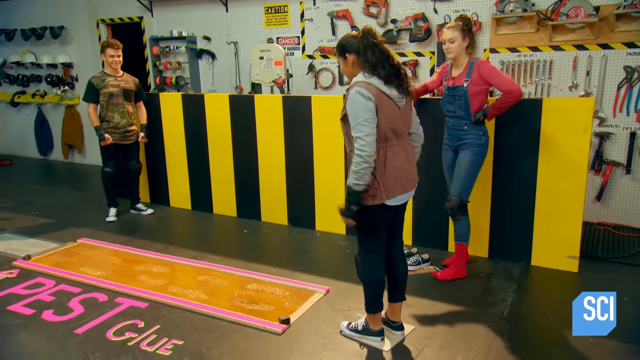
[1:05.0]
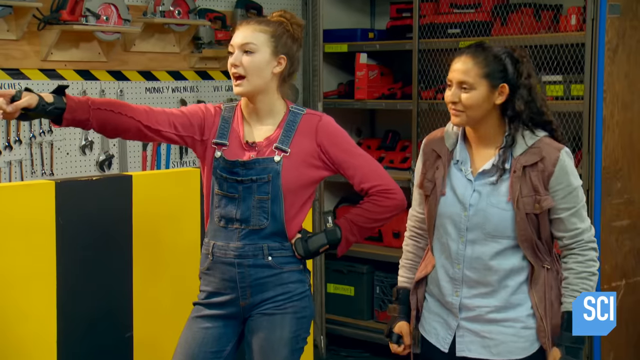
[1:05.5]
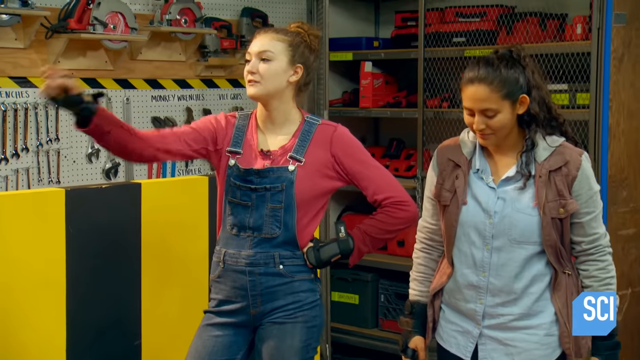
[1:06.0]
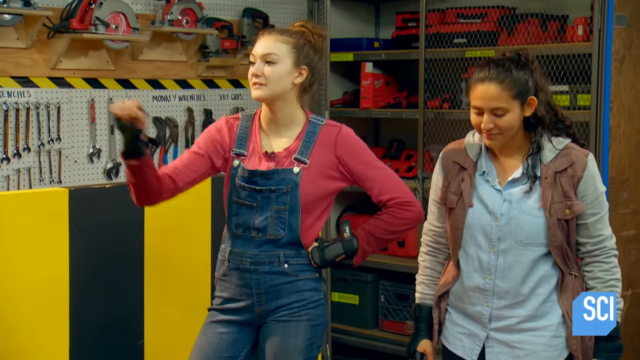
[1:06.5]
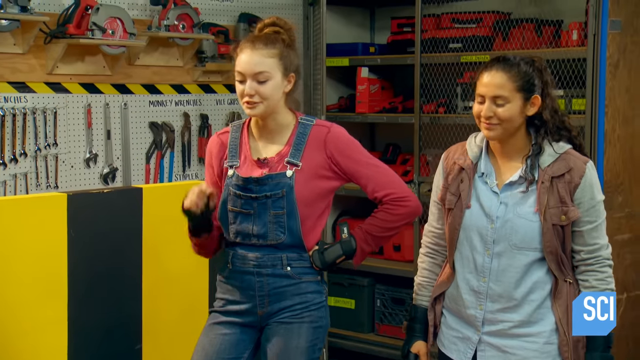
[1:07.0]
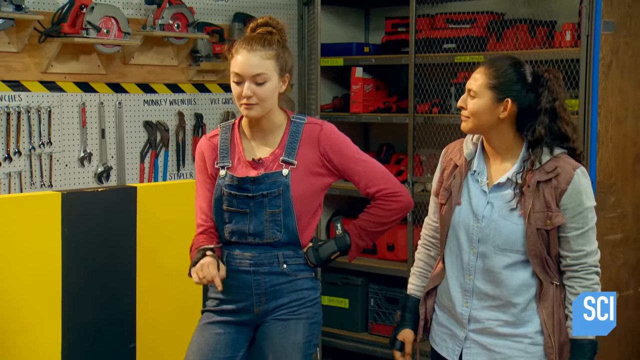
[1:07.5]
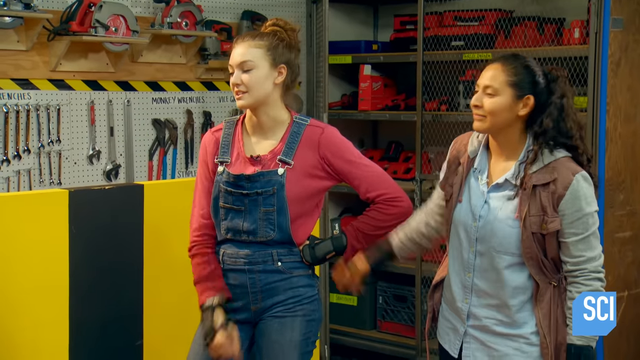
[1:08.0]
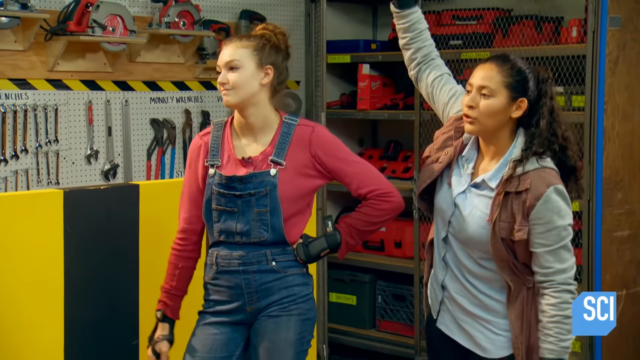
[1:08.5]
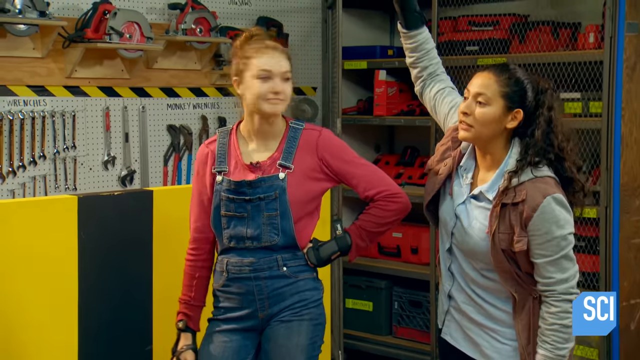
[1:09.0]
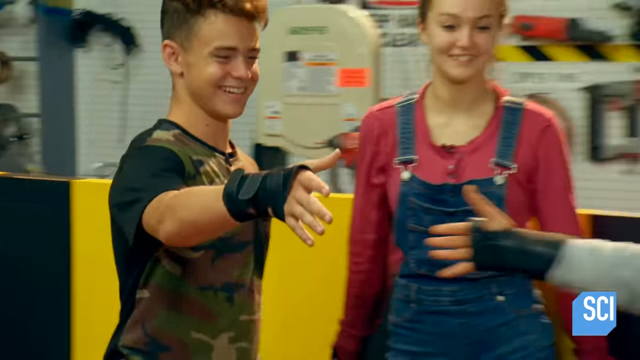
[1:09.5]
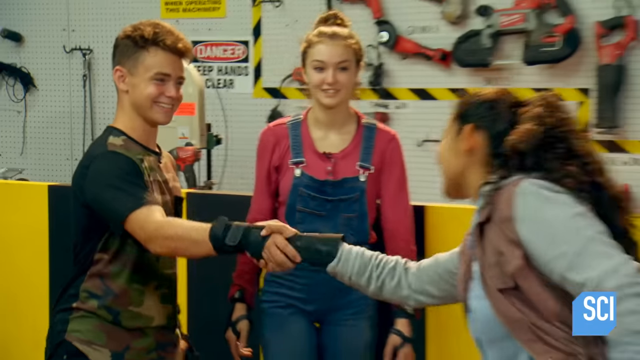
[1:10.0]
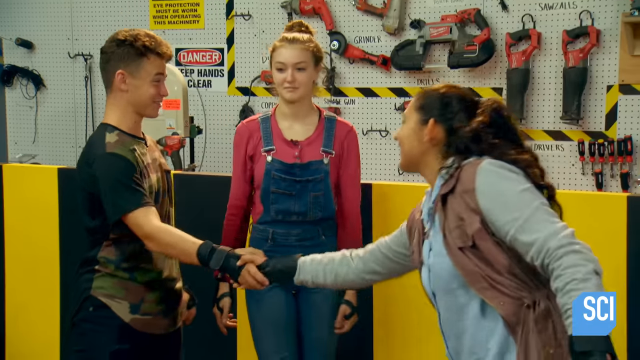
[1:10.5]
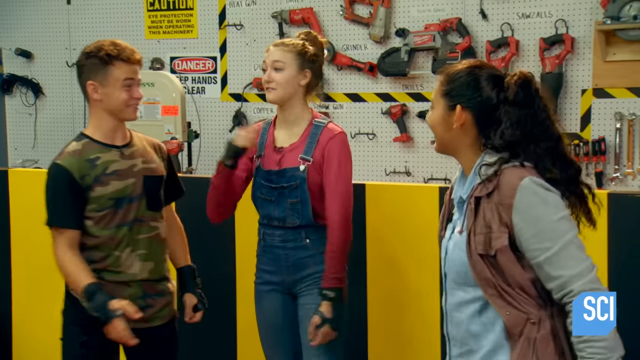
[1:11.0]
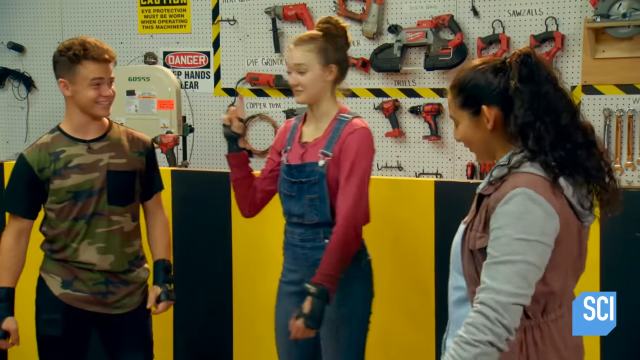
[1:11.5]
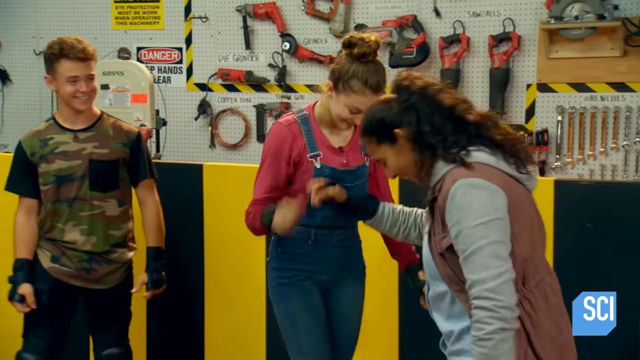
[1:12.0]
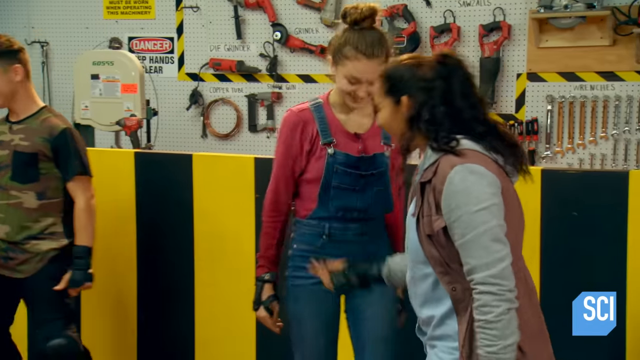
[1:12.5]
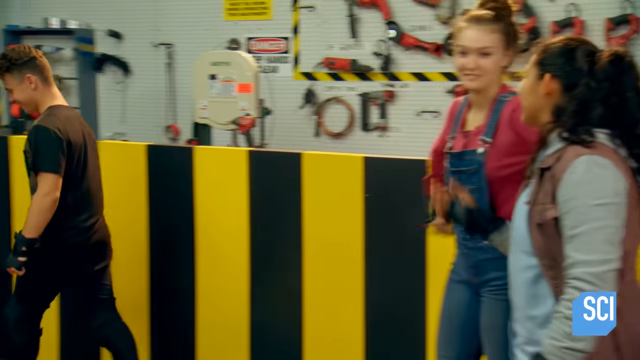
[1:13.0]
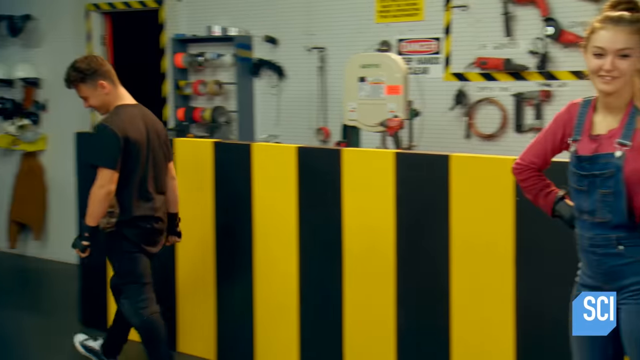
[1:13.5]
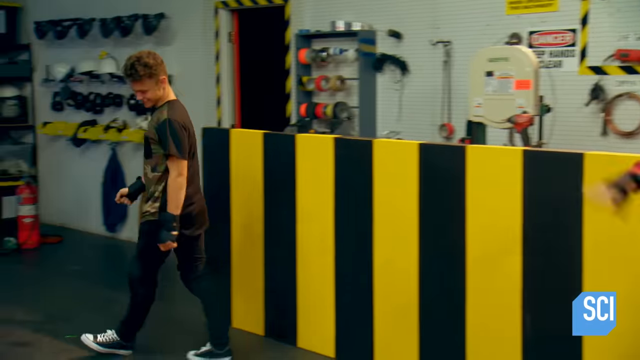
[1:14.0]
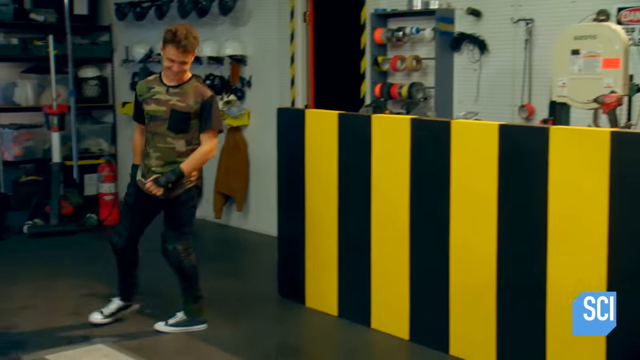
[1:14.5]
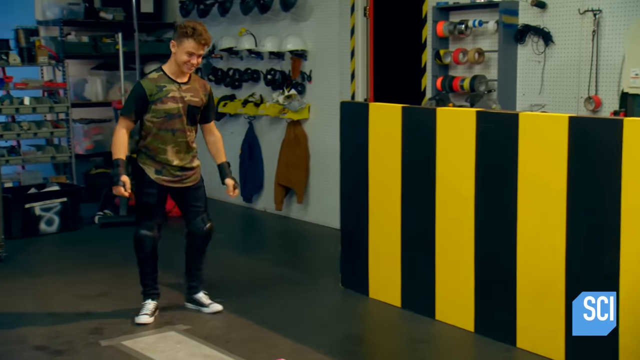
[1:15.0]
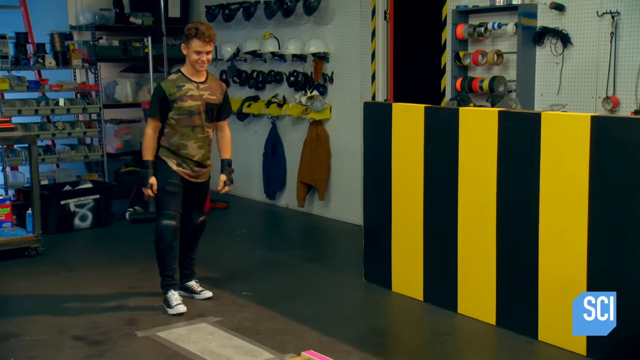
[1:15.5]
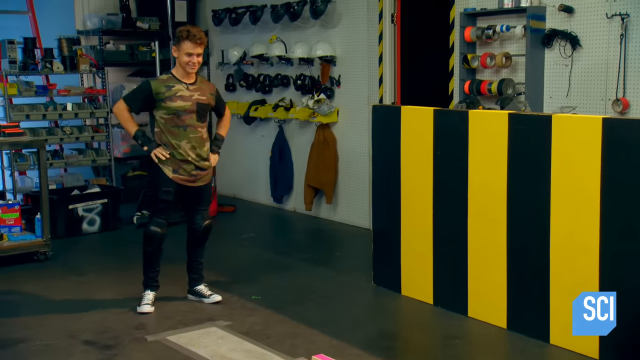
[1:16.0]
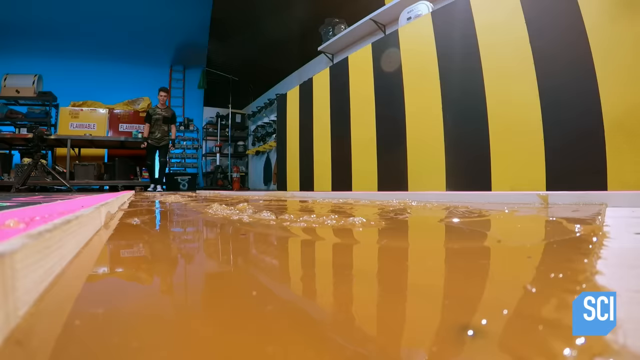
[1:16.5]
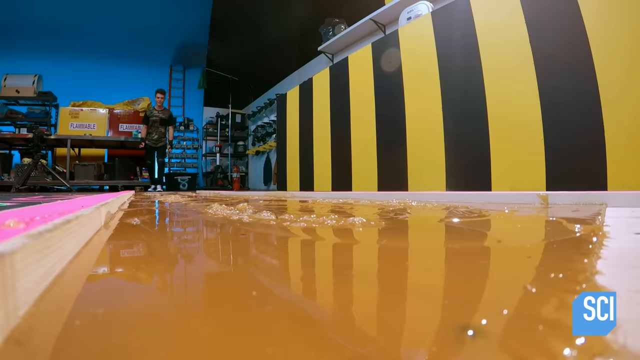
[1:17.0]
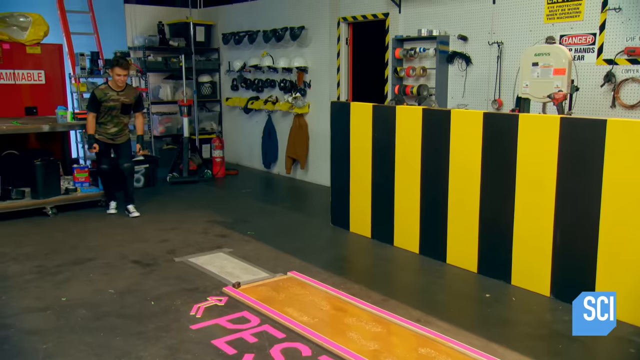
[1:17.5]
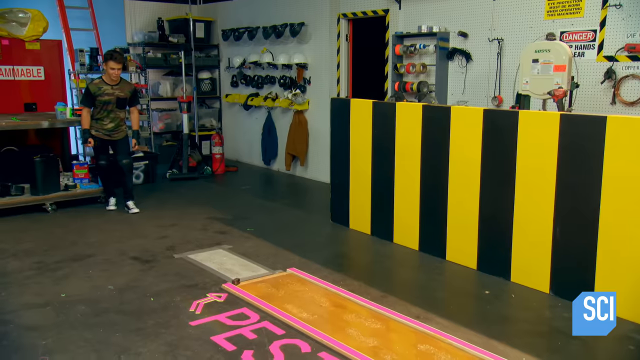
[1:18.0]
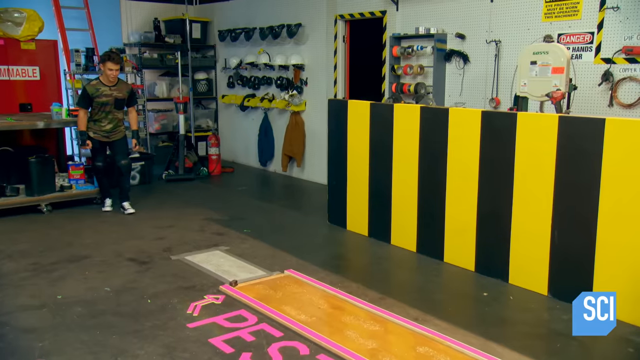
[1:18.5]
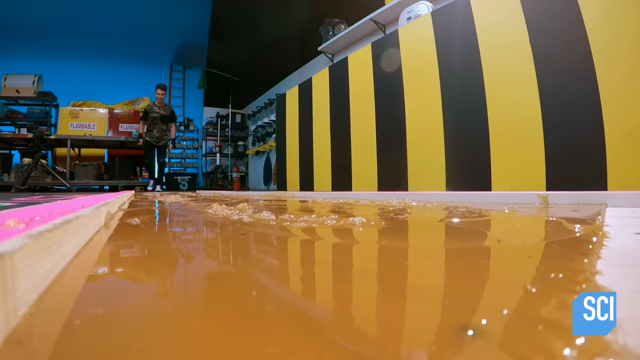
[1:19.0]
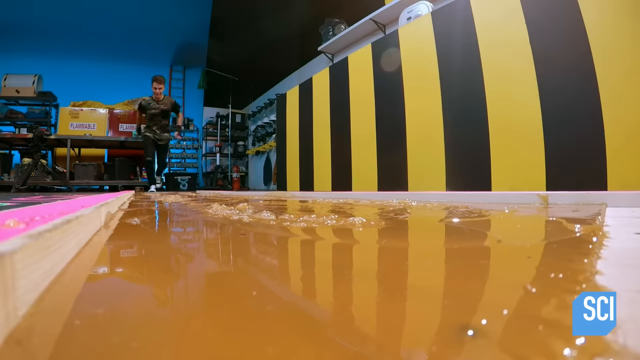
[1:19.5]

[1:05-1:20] The young lady in the overalls is standing with the girl in the cargo vest, and they shake hands with the teen boy in the black and camouflage shirt. He approaches the starting point of the board with the glue poured into it. Below it is pink masking tape reading "pest glue" with arrows pointing upward. The camera moves to show the glue from eye level on the ground. The young man shakes the hand of the girl in the cargo vest, steps back, and puts his hands on his hips. He begins to take a step forward. The girl in the overalls gives him instructions and steps away to the right to join the girl in the cargo vest. The young man backs up a few steps and puts his arms to his sides as though about to start walking or running, then begins moving forward in a running motion as the girls stand off to the right. Behind him are more shelving, metal cabinetry, and equipment, including wrenches, drills, and saws hanging on the walls.